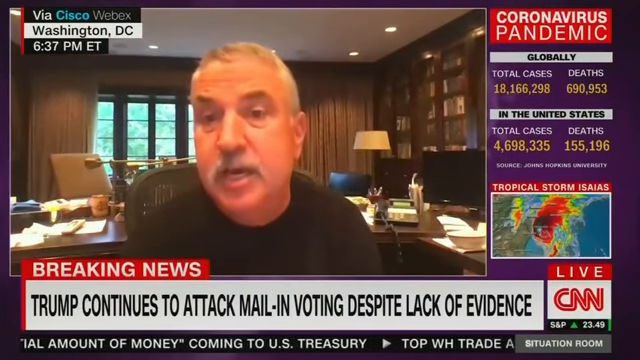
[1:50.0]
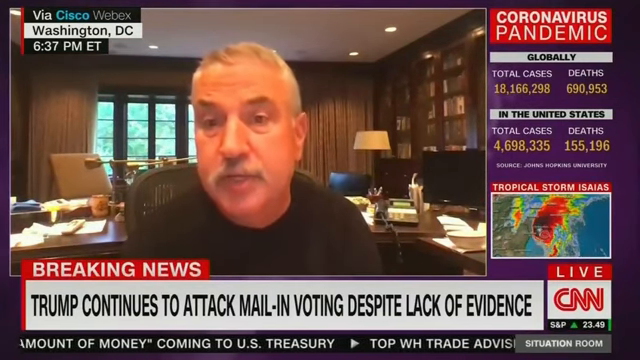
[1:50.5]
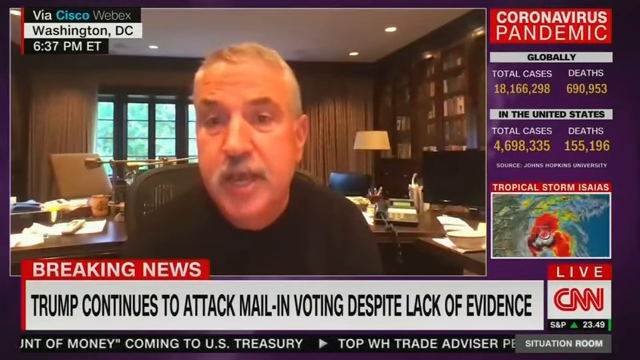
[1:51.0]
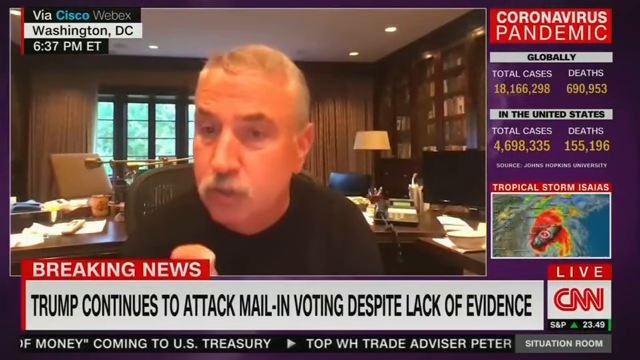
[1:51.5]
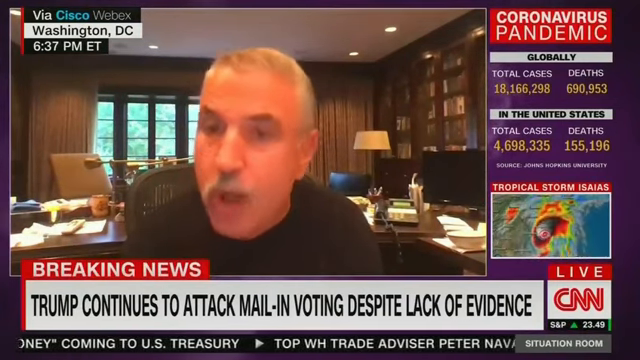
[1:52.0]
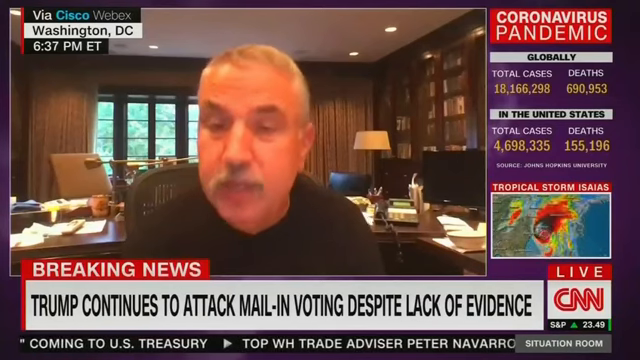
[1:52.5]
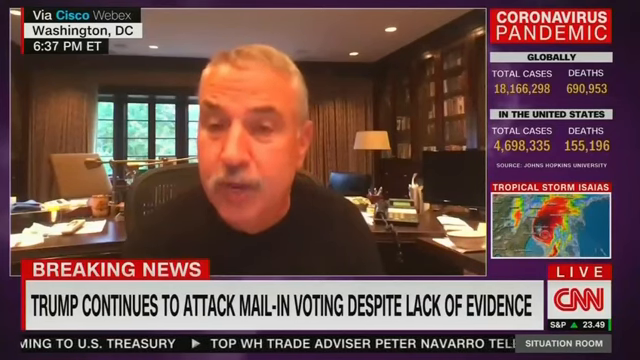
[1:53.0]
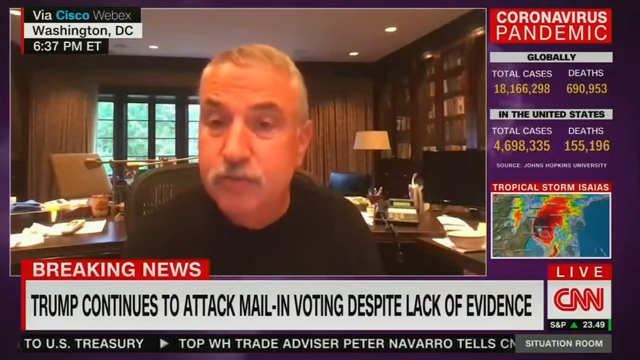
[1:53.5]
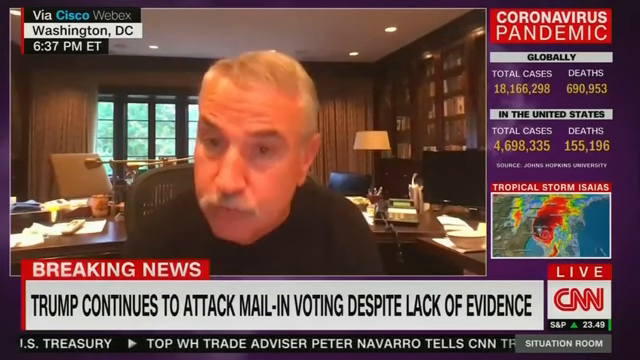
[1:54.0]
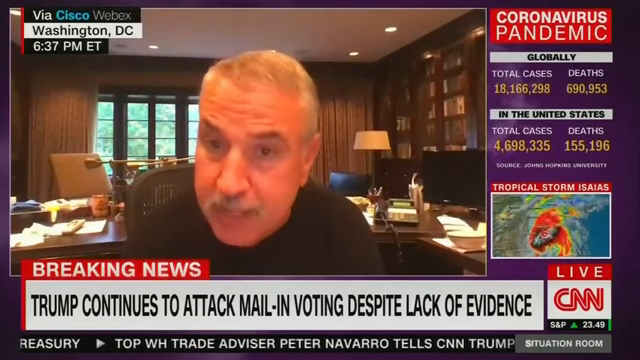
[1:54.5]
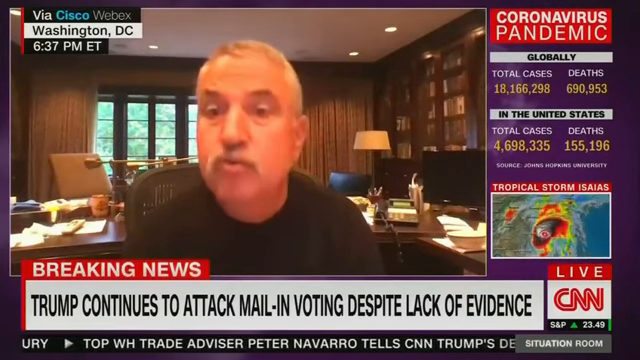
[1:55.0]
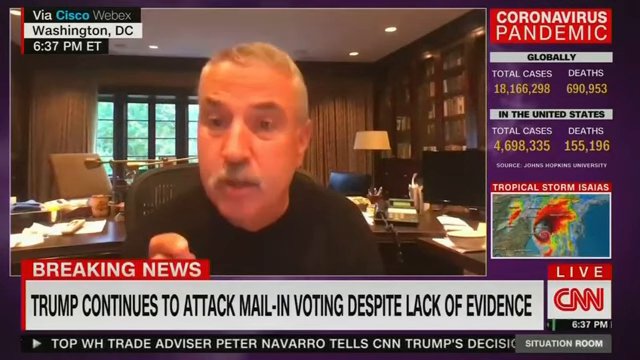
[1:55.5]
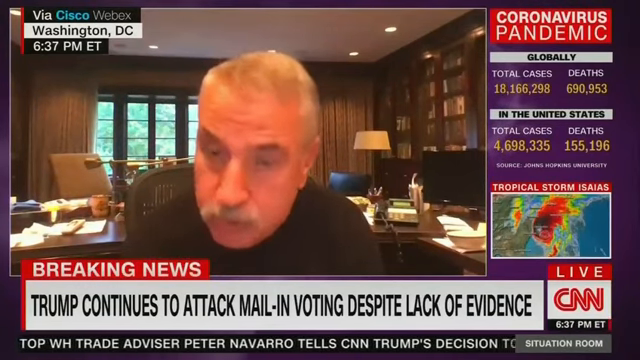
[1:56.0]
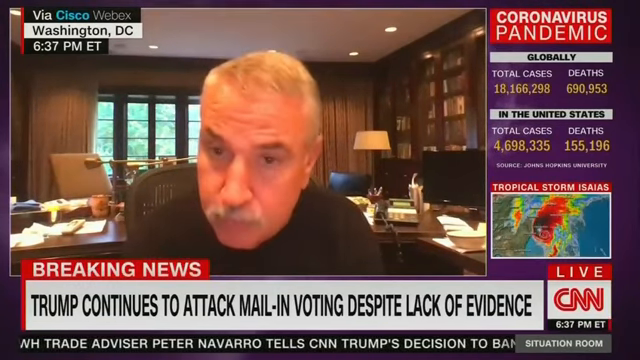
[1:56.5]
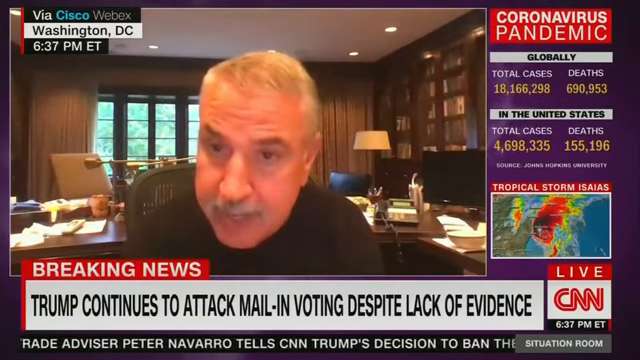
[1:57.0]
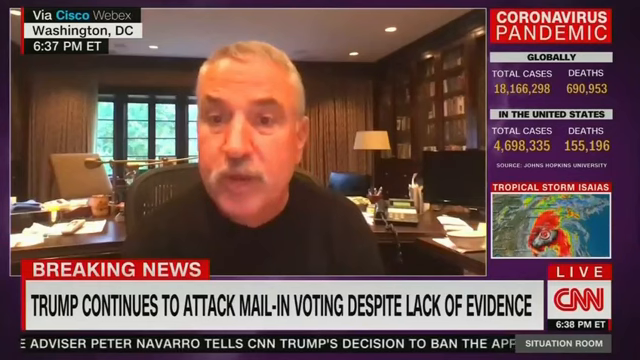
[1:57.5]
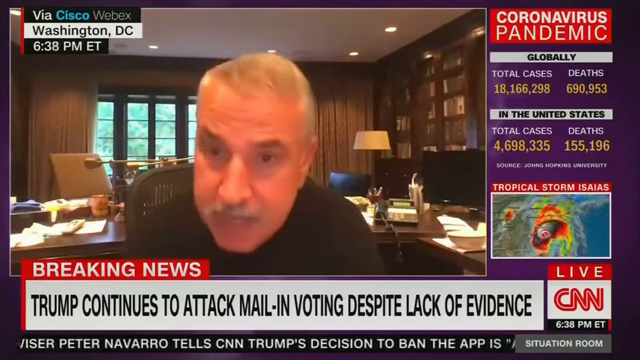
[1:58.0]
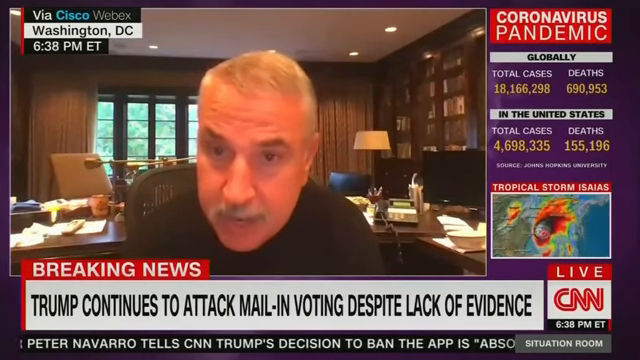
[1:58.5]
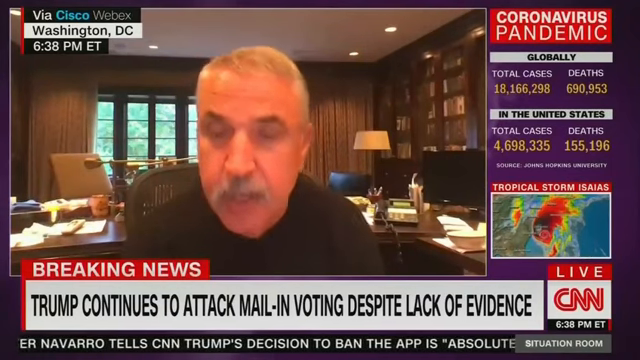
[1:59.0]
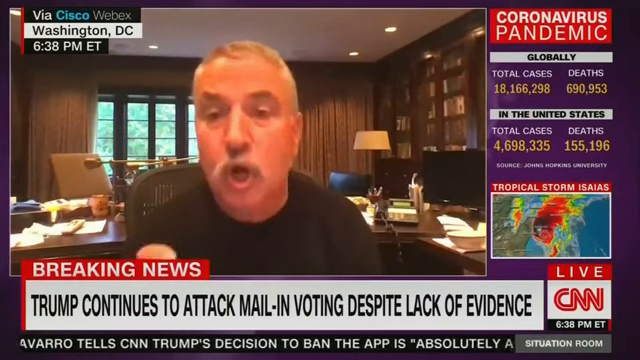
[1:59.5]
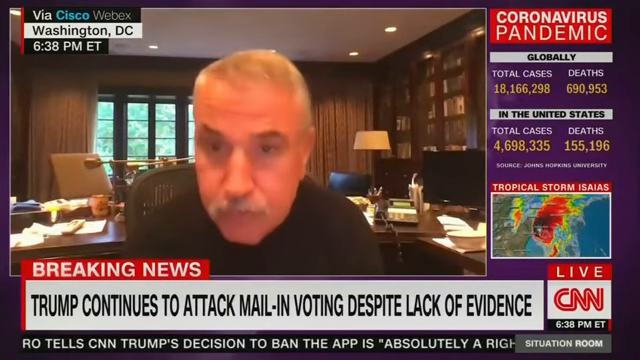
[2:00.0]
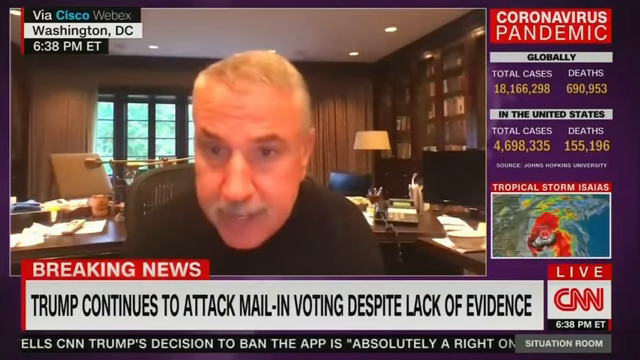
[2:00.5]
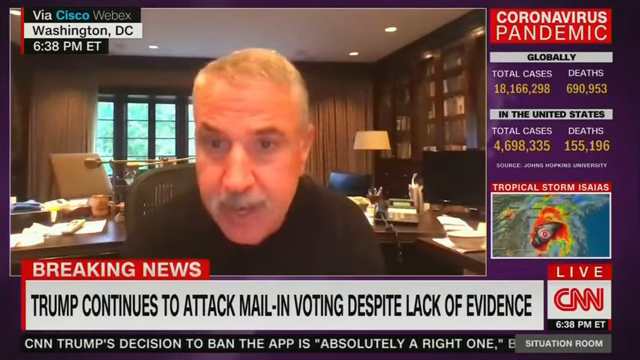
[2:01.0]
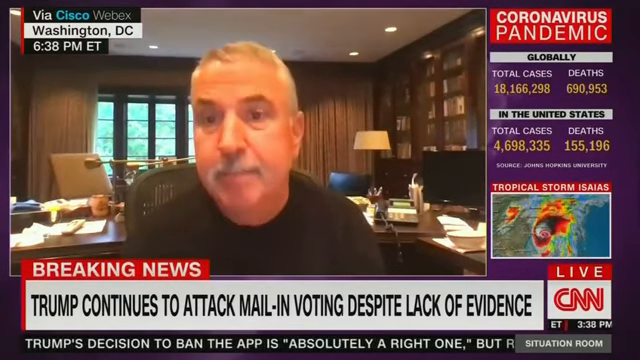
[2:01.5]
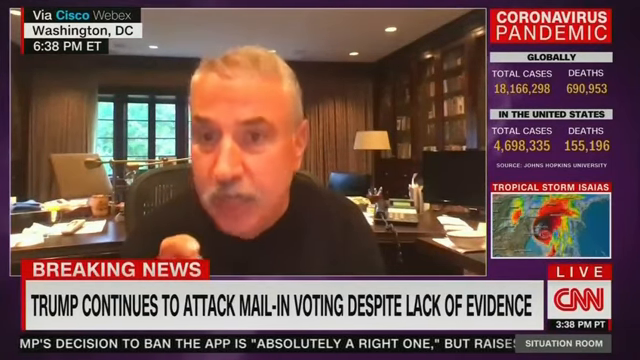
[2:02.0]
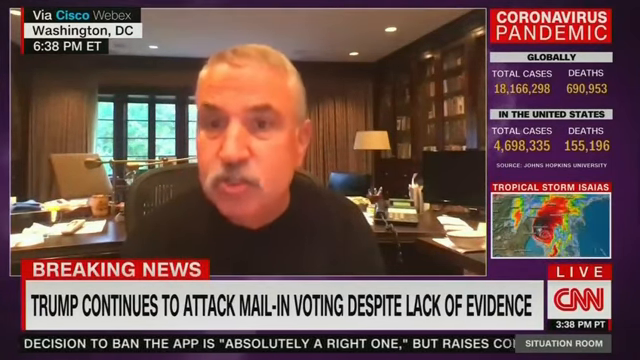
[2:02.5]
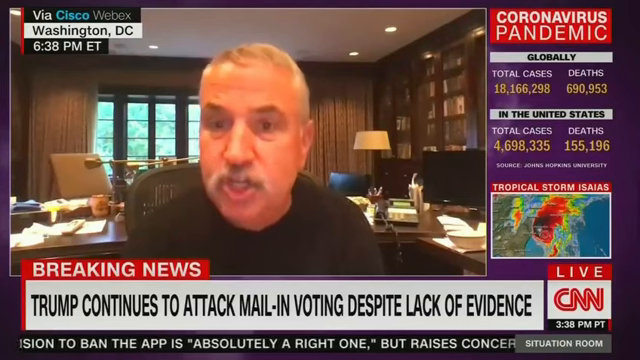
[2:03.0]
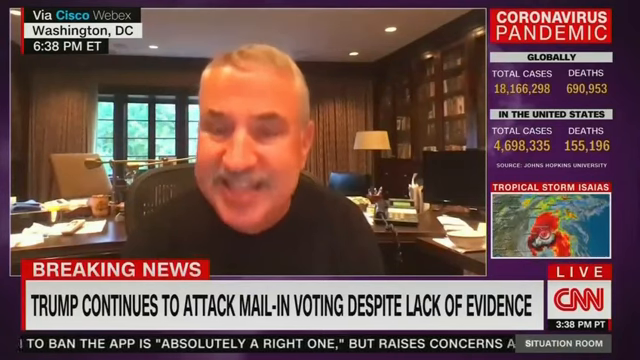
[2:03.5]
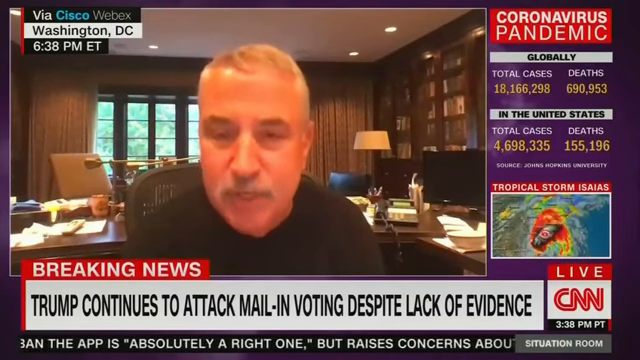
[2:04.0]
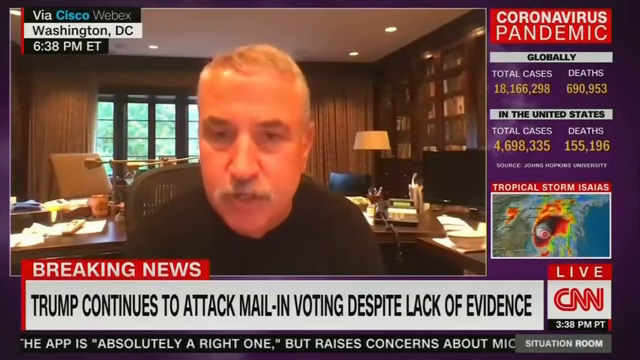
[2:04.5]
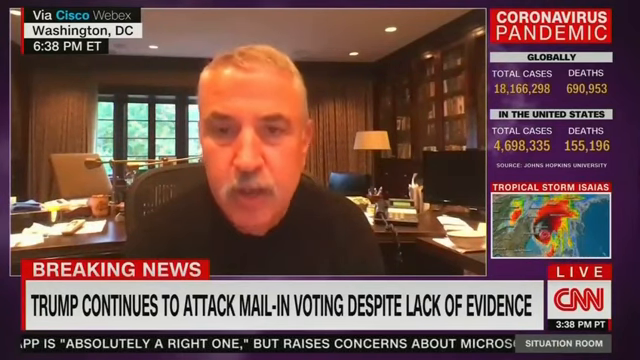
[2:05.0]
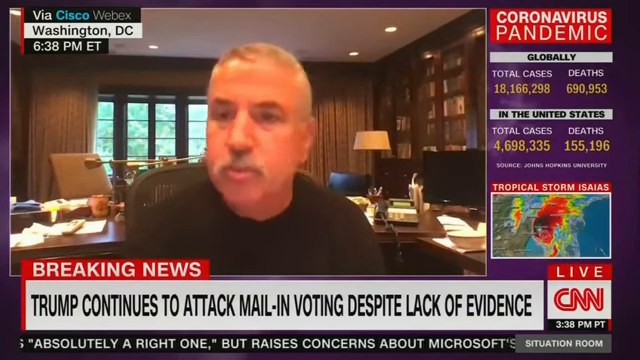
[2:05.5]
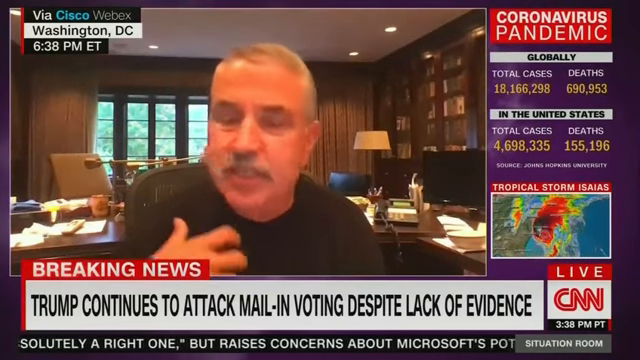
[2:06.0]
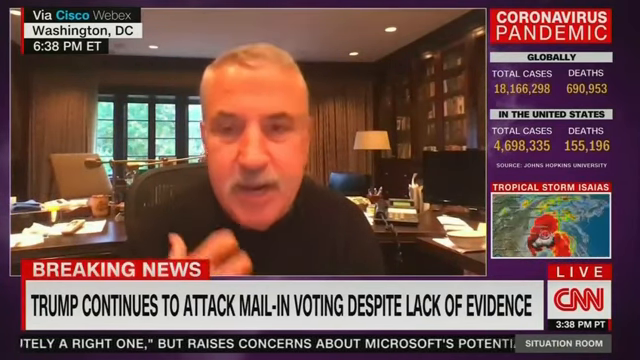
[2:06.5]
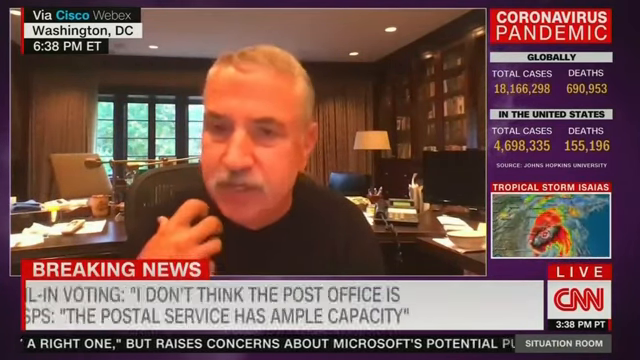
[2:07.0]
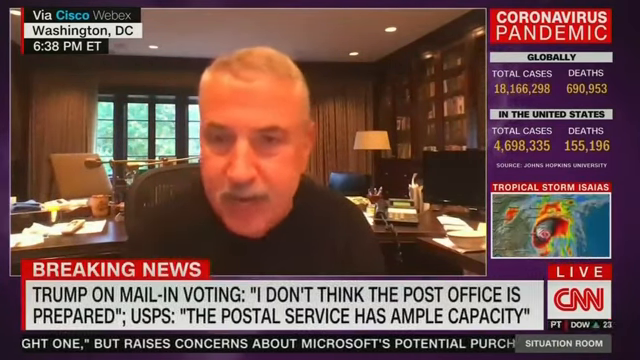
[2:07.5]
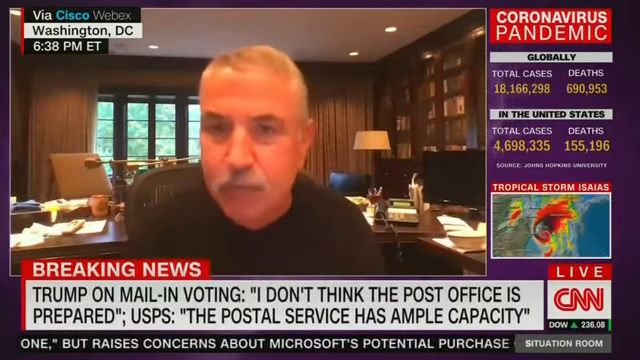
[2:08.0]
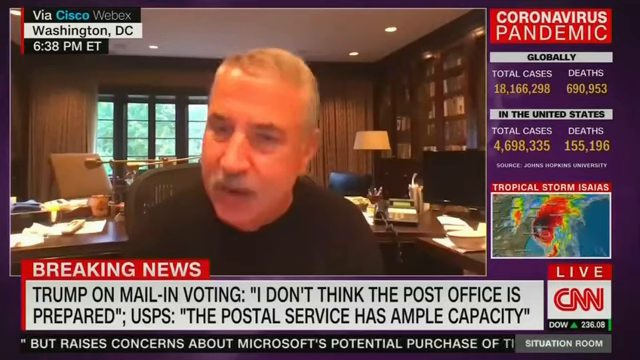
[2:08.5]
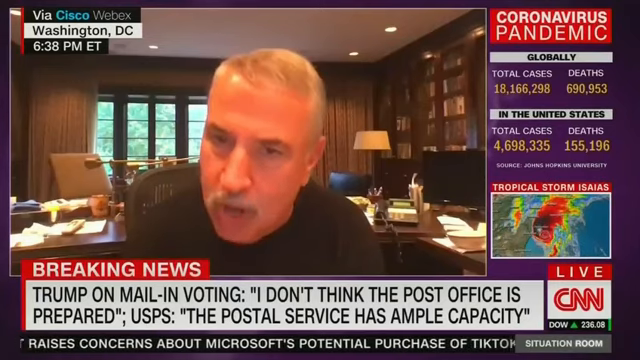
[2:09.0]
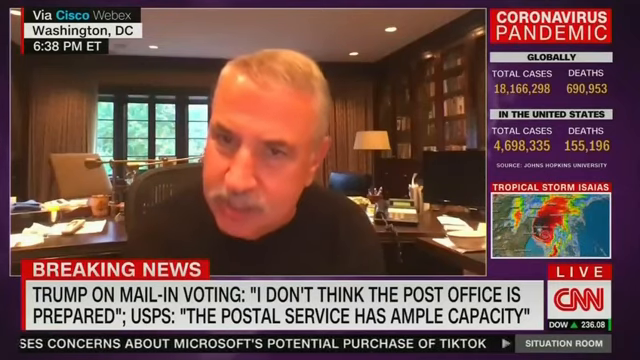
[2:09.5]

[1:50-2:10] The man appears via Webex from Washington, D.C. A breaking news banner reads "Trump continues to attack mail-in voting despite lack of evidence." On the side, text reads "coronavirus pandemic" with total cases and deaths globally and in the United States, and it looks like a tropical storm is being tracked. The broadcast is live from CNN. The man talking wears a black shirt, has a mustache, and looks maybe in his 50s, maybe late 50s. News runs along the bottom of the screen, reported from the Situation Room. Text then reads "Trump on mail-in voting: I don't think the post office is prepared. USPS, the Postal Service, has ample capacity." The man seems passionate while talking.